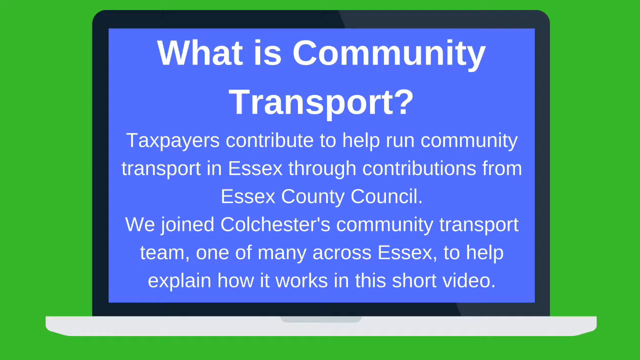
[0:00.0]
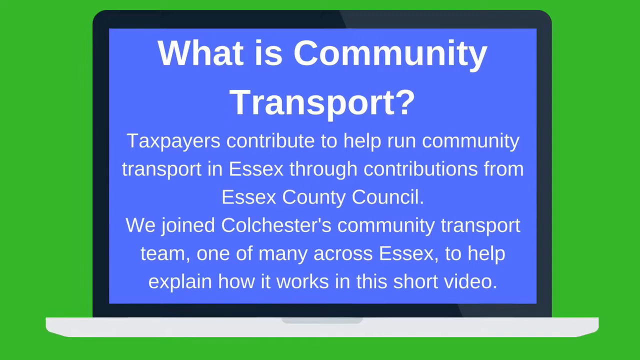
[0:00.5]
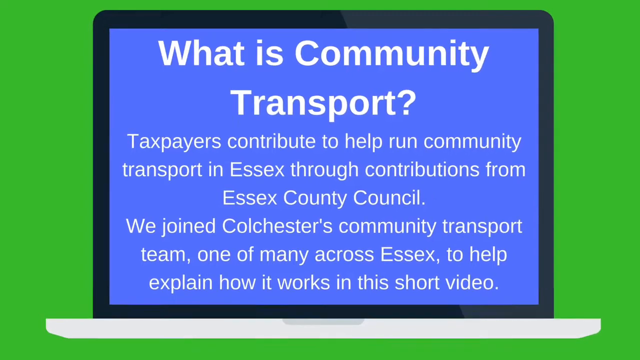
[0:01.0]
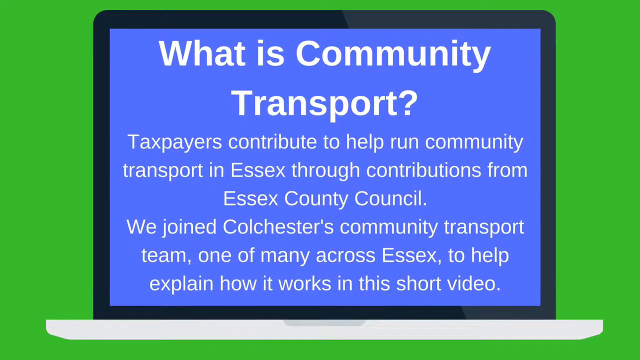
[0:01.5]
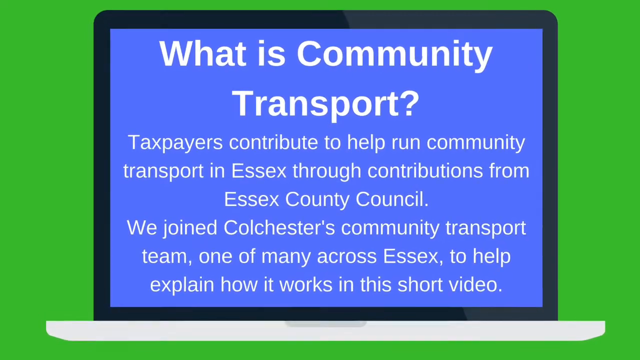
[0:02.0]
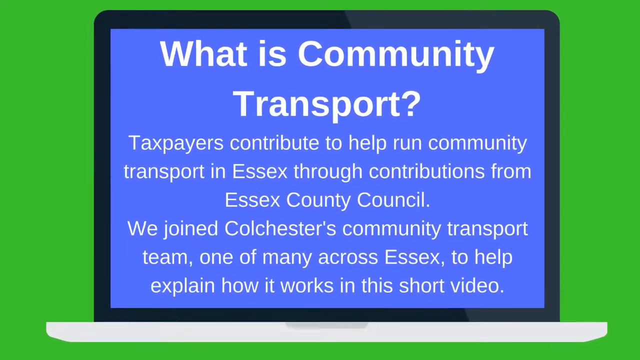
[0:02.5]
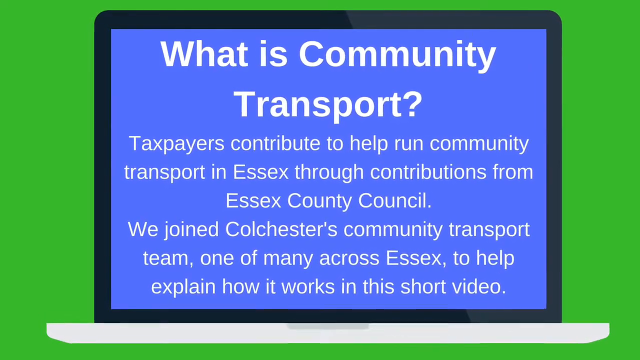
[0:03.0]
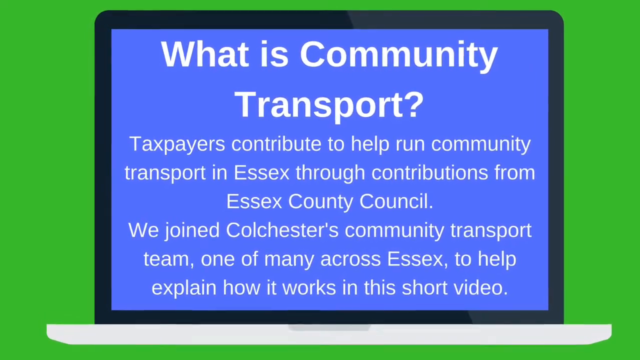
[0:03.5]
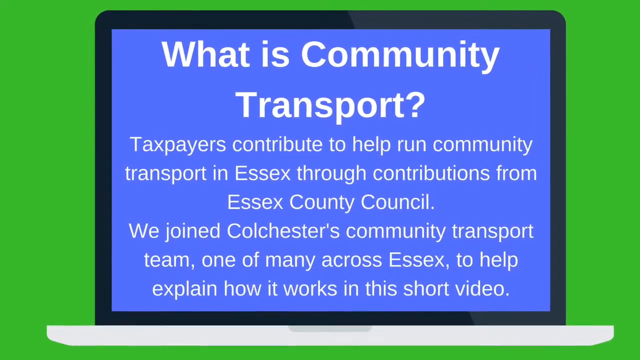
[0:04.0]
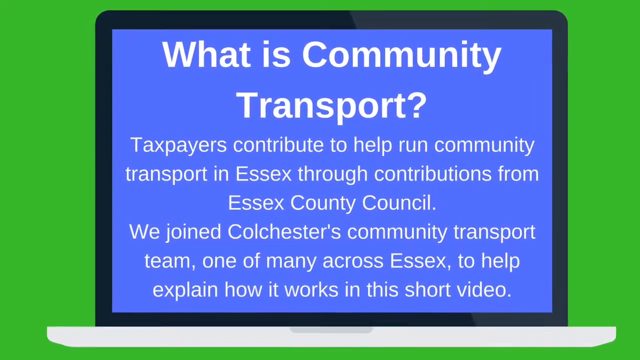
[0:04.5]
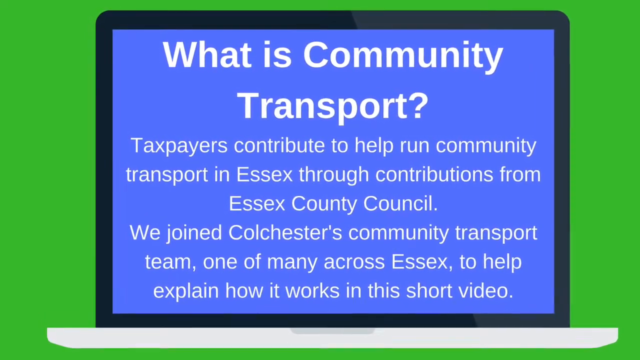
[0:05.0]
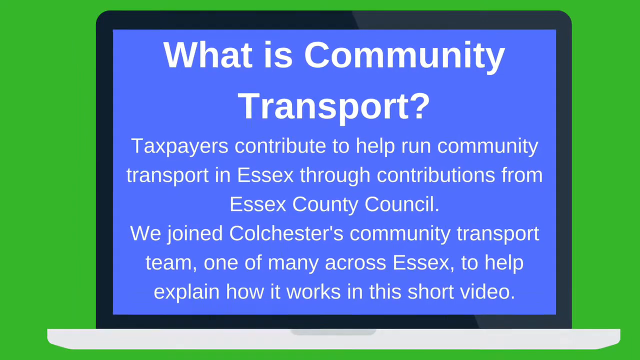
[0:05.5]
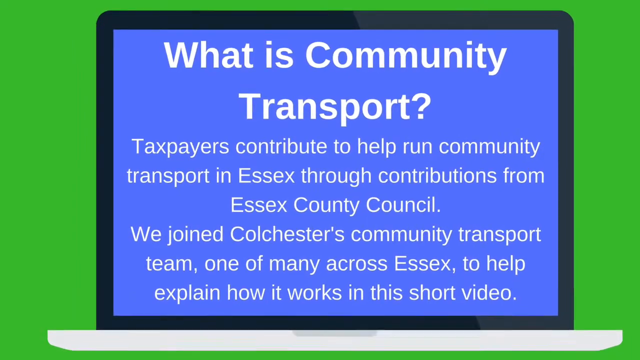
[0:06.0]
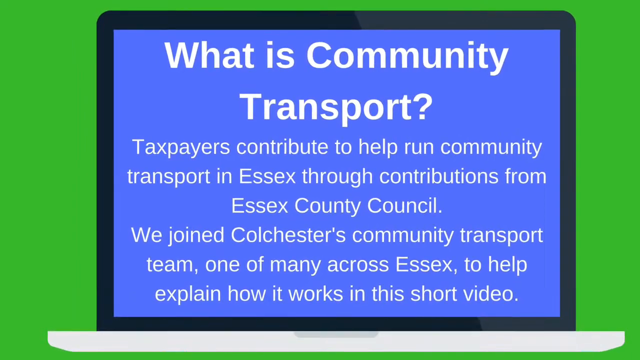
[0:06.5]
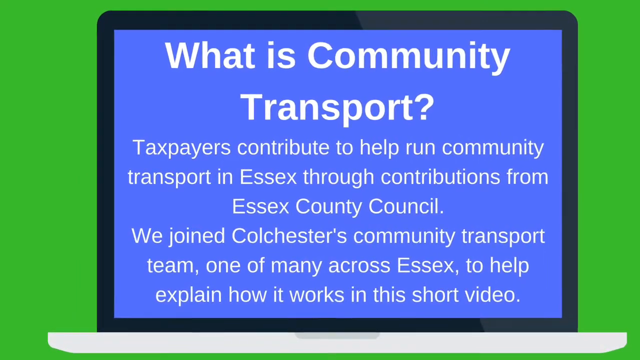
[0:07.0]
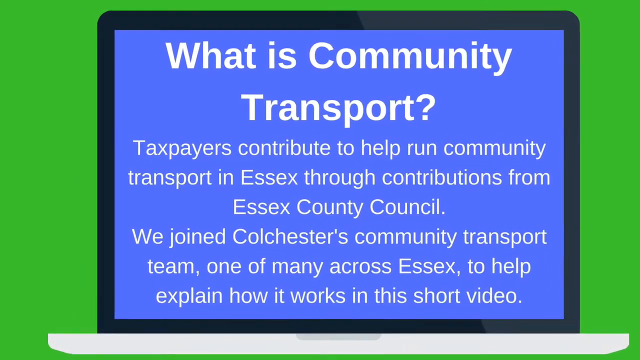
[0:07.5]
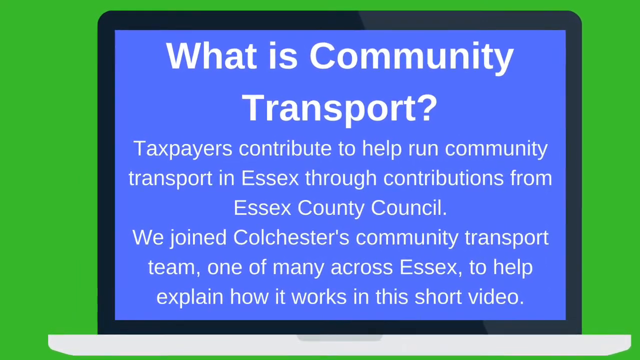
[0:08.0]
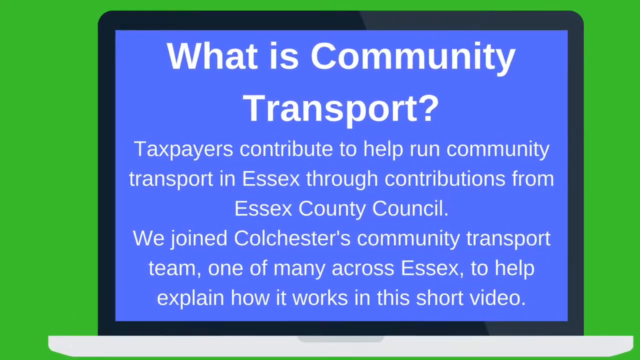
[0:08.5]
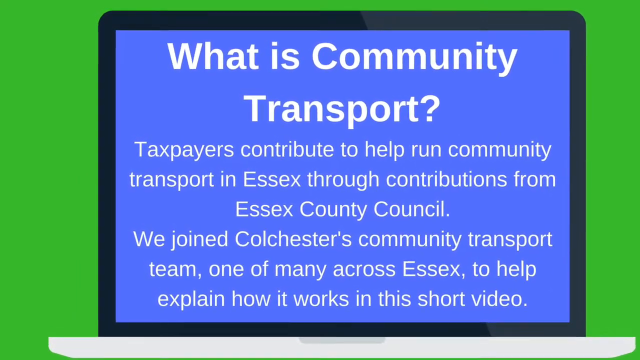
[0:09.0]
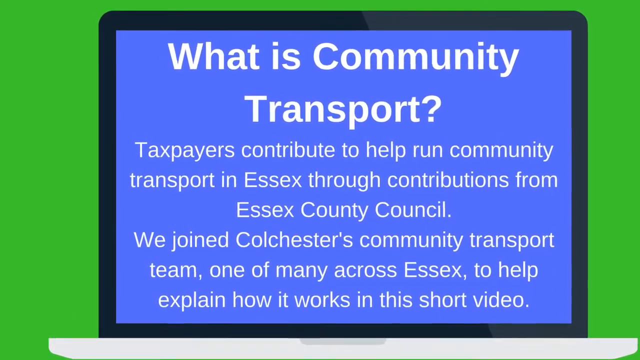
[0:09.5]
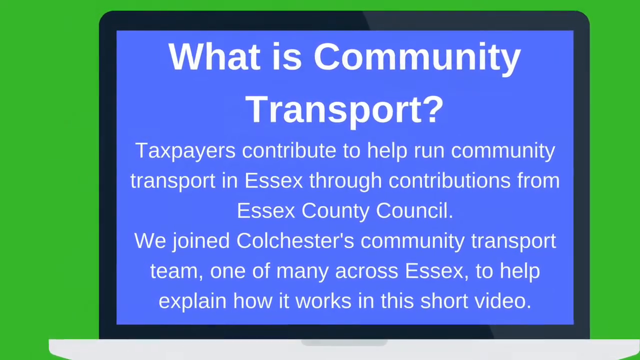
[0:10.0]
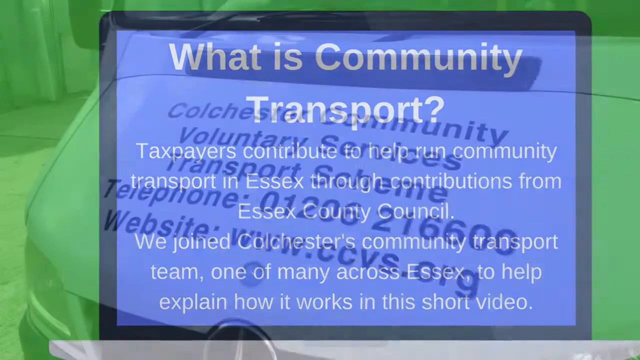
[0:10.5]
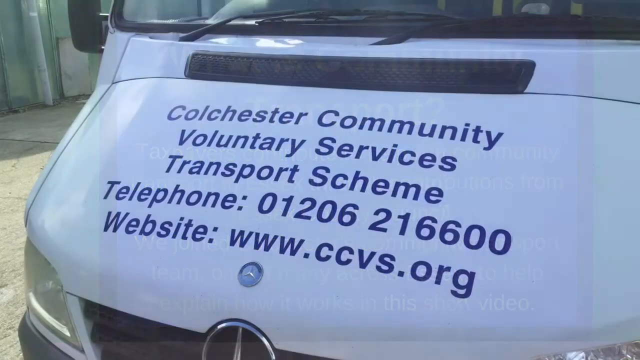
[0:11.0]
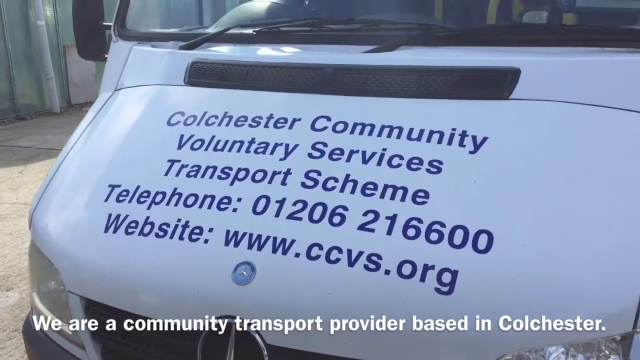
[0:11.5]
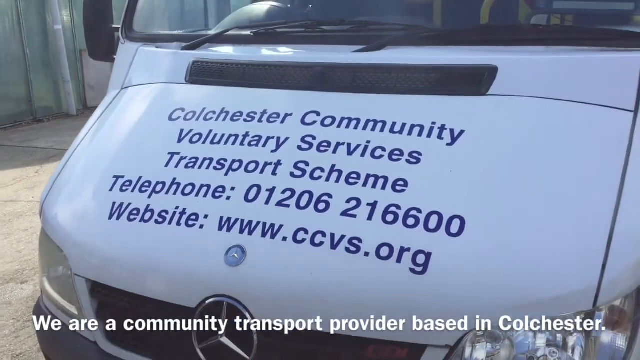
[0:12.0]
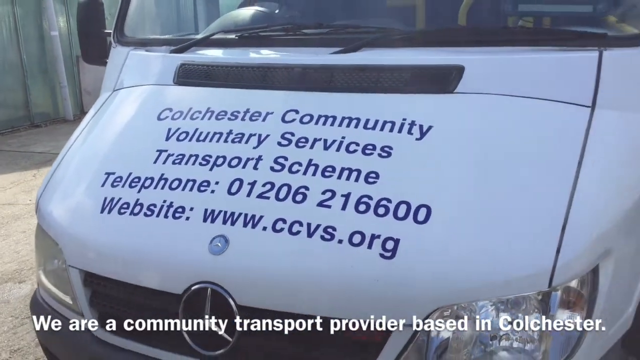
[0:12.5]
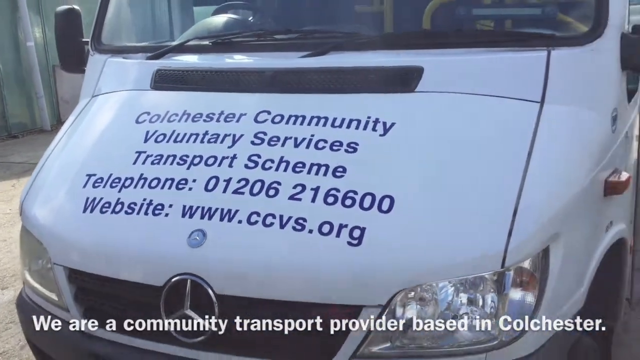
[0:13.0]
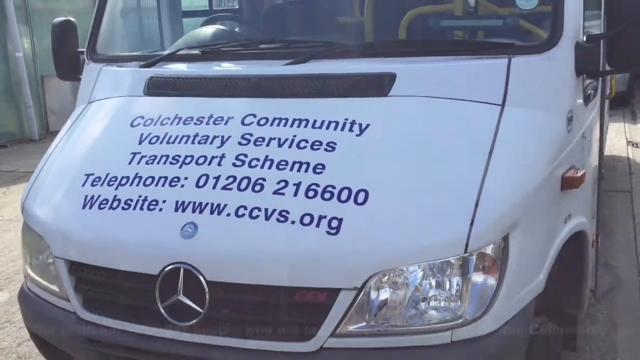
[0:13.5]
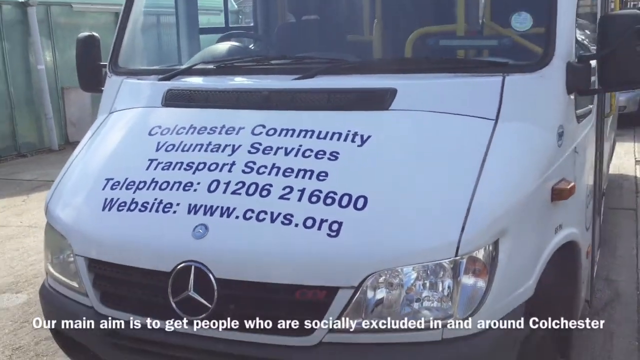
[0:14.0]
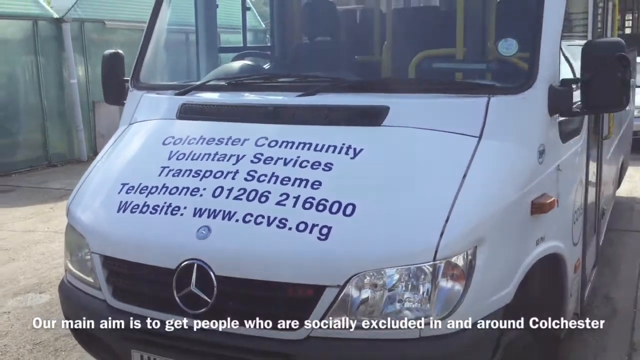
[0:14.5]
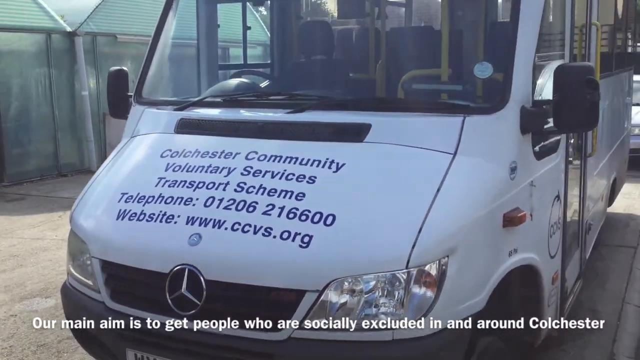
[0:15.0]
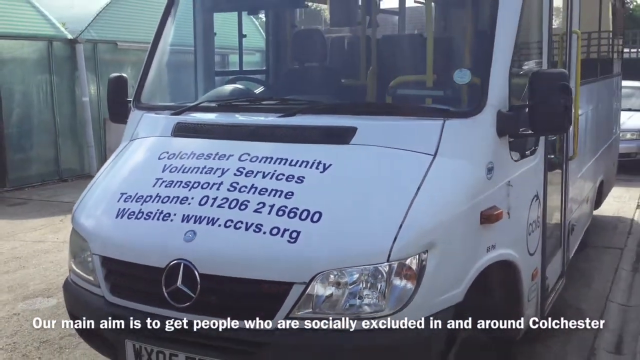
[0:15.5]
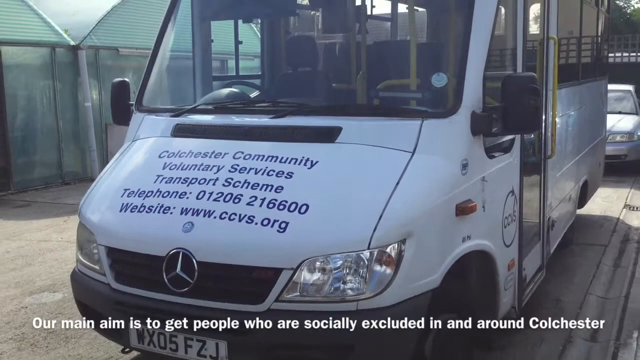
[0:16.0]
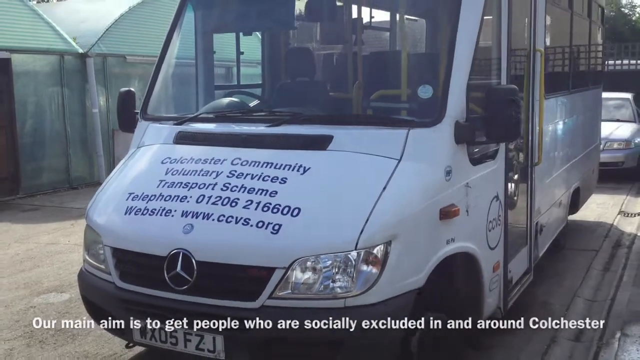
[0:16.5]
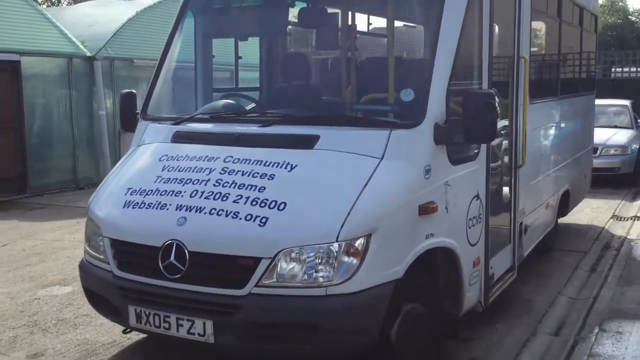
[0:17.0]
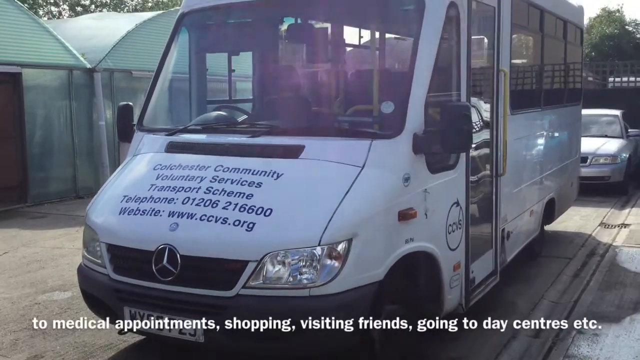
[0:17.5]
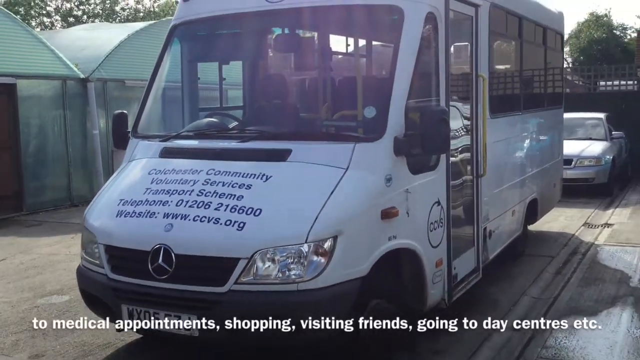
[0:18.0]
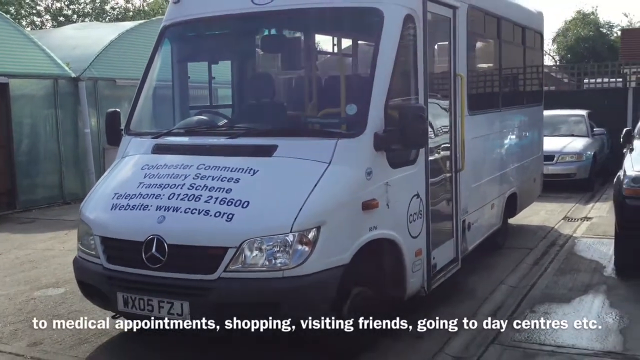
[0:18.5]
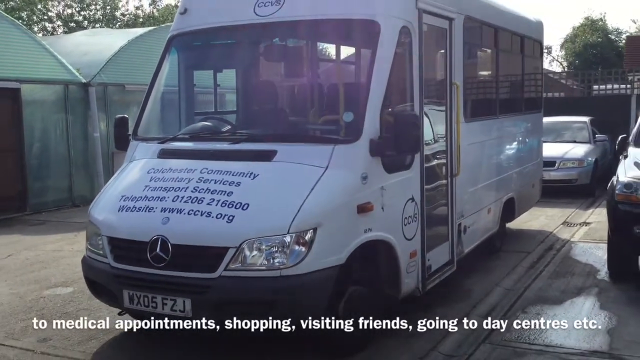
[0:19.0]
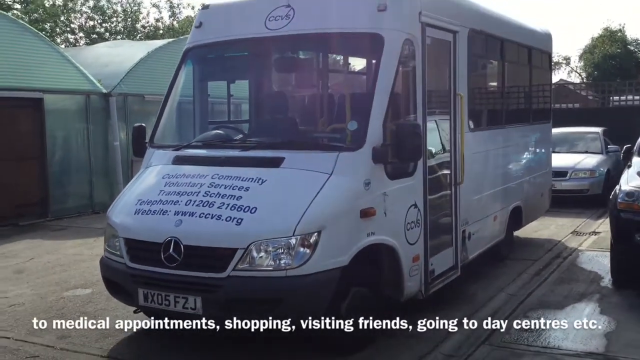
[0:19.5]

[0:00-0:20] A green background has a large clipart image of an open laptop in the middle. The laptop screen has a blue background with white text: a larger bold heading at the top reads "what is community transport", and underneath, in smaller, less bold white font, it reads "taxpayers contribute to help run community transport in Essex through contributions from Essex County Council. We joined Colchester's community transport team, one of many across Essex, to help explain how it works in this short video." The screen seems to zoom in very slightly, and the laptop moves very slightly downwards and to the right. The scene then changes to the front hood of a Mercedes Sprinter bus that is fairly small and white. Printed on the hood in blue letters is "Colchester Community Voluntary Services Transport Scheme, telephone: 012062 16600" and the website "www.ccvs.org". The camera then seems to zoom out from the hood, showing more of the bus: three windows on the side and windows in the back. It is parked on a small street that looks like a neighborhood street. A white caption at the bottom of the video reads "We are a community transport provider based in Colchester. Our main aim is to get people who are socially excluded in and around Colchester to medical appointments, shopping, visiting friends, going to day centers, etc."